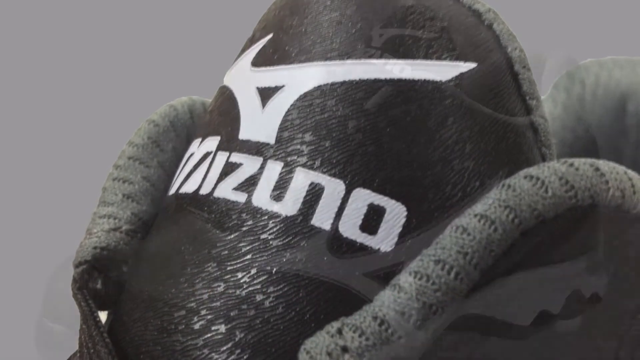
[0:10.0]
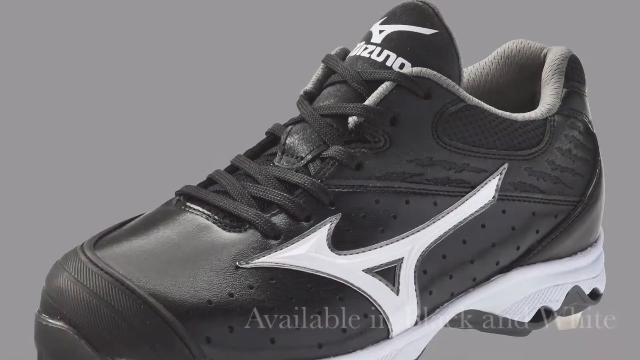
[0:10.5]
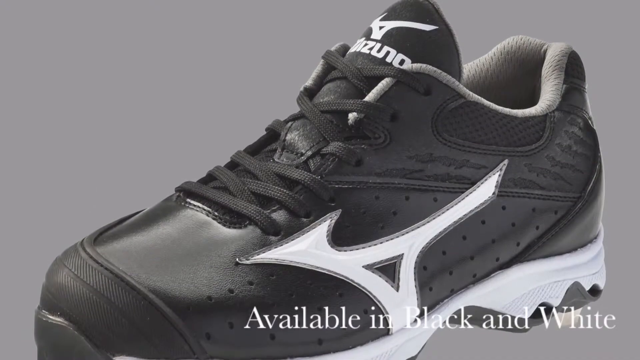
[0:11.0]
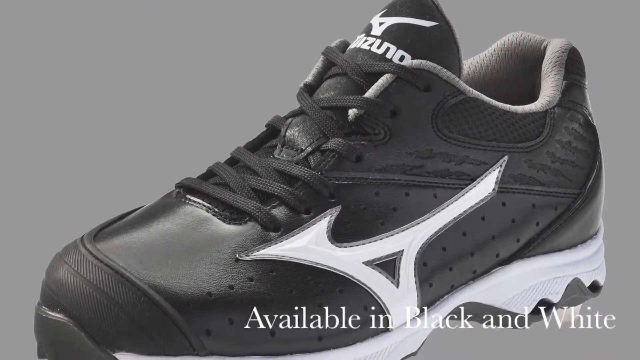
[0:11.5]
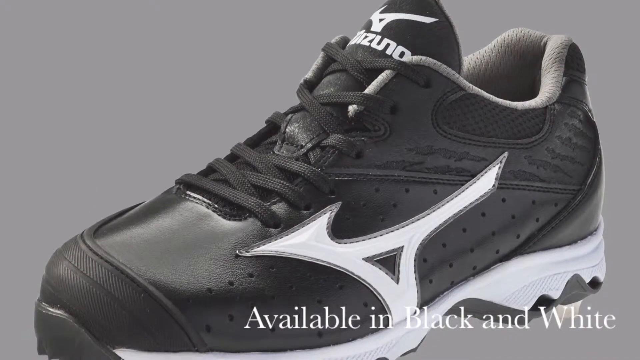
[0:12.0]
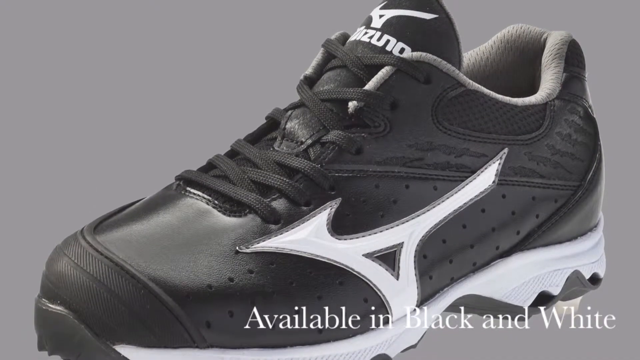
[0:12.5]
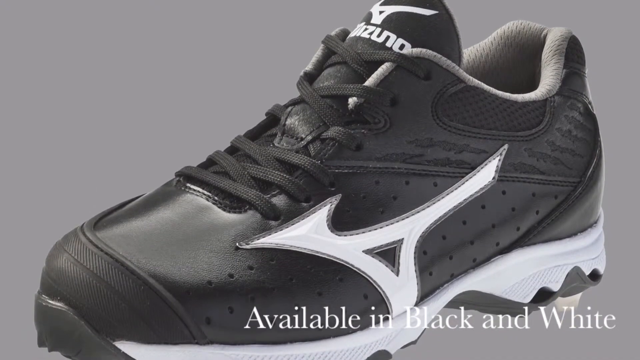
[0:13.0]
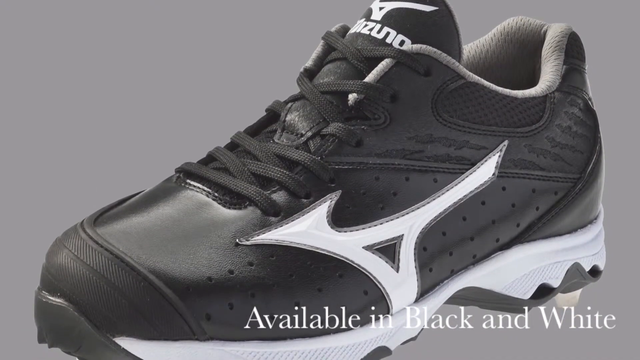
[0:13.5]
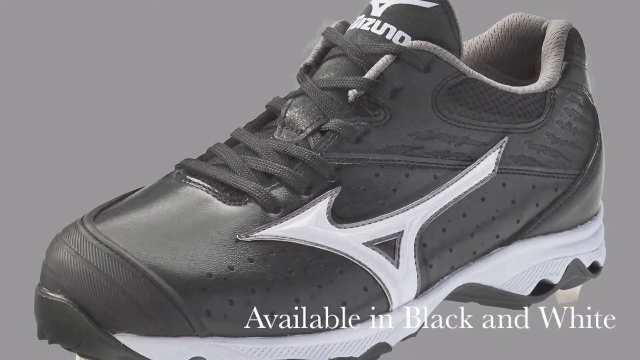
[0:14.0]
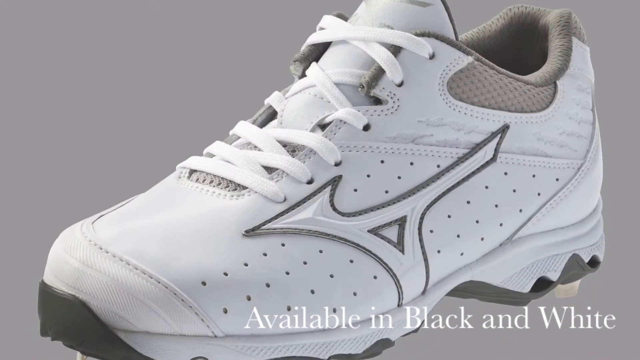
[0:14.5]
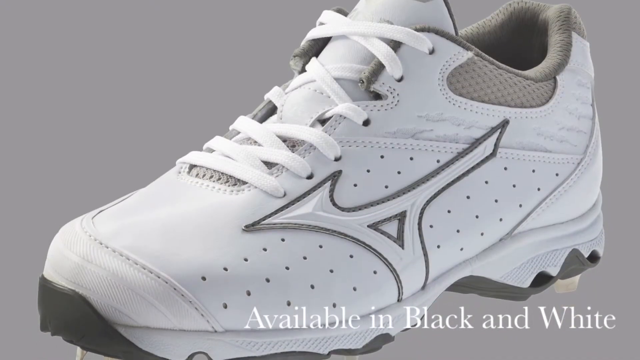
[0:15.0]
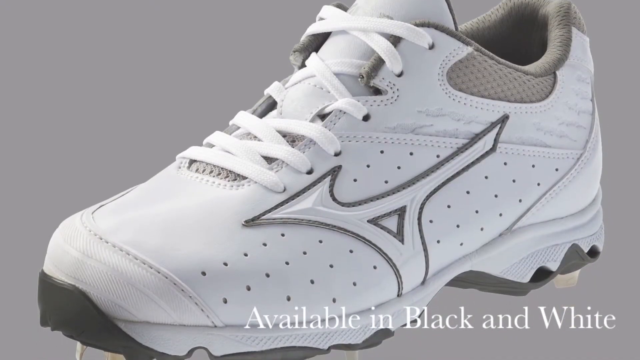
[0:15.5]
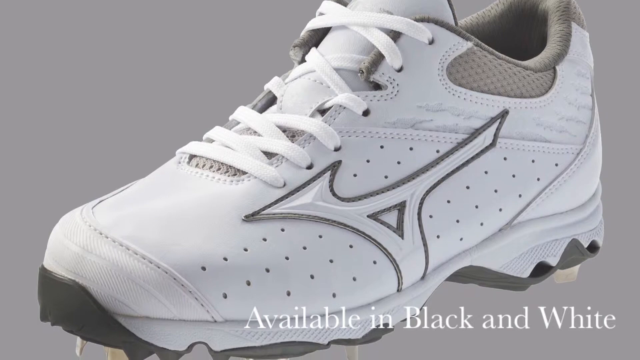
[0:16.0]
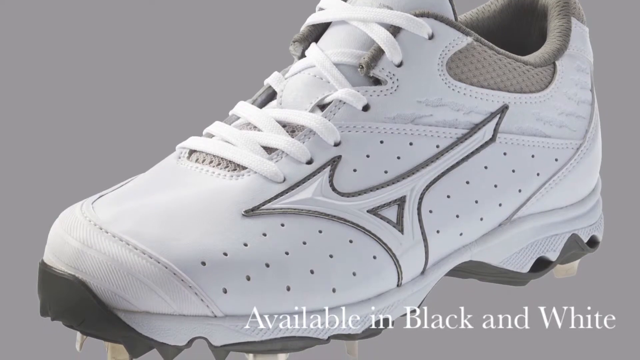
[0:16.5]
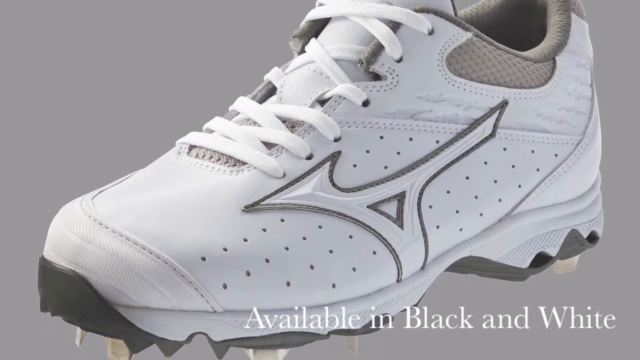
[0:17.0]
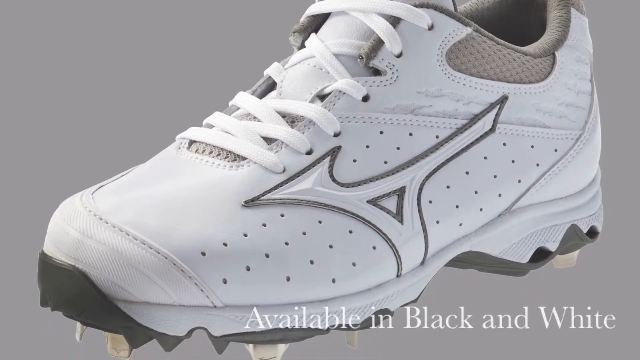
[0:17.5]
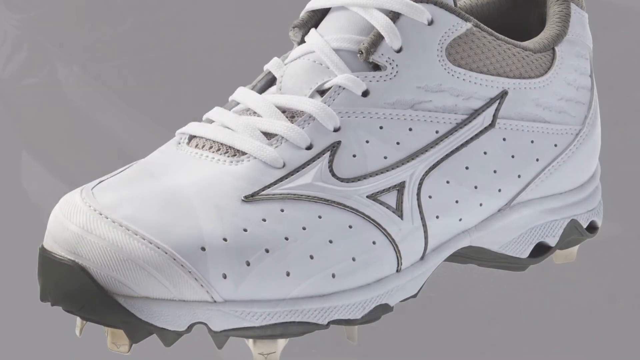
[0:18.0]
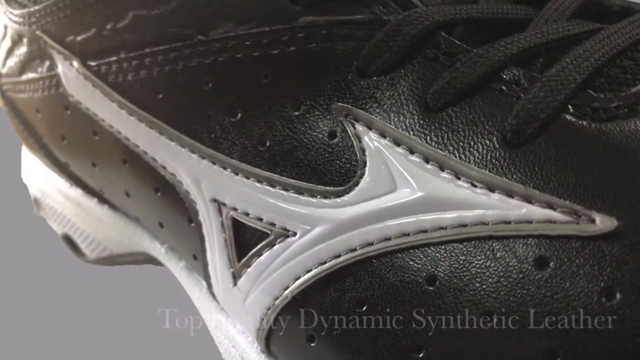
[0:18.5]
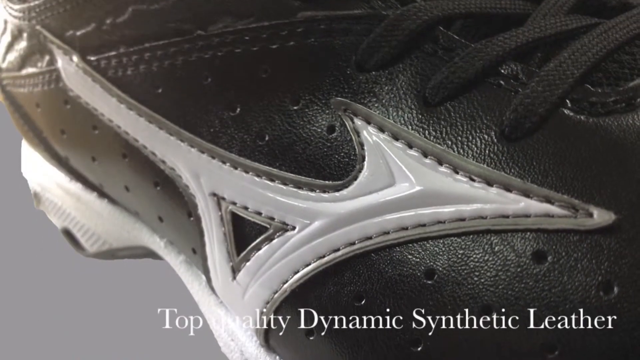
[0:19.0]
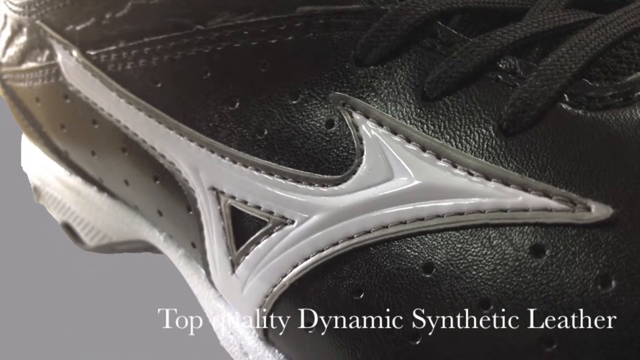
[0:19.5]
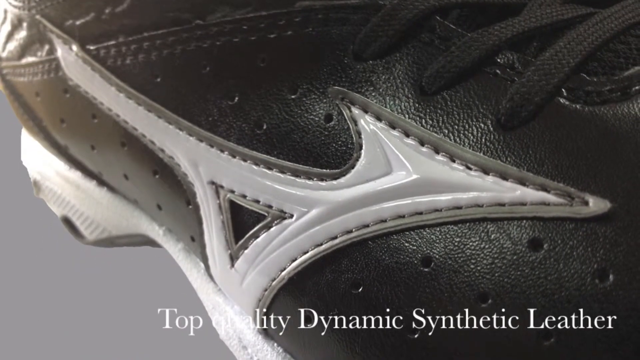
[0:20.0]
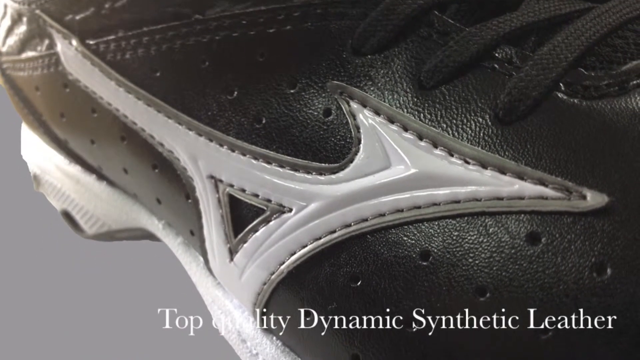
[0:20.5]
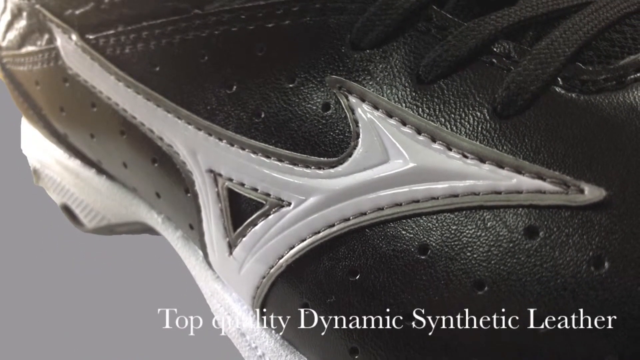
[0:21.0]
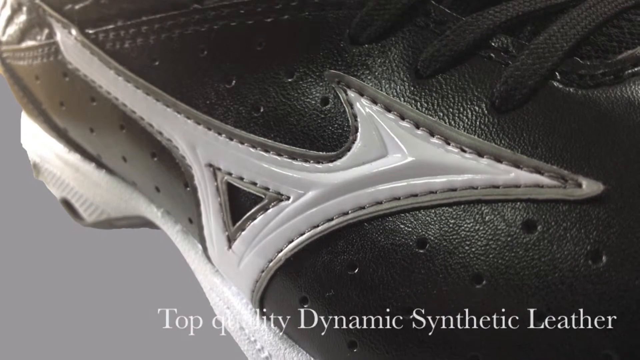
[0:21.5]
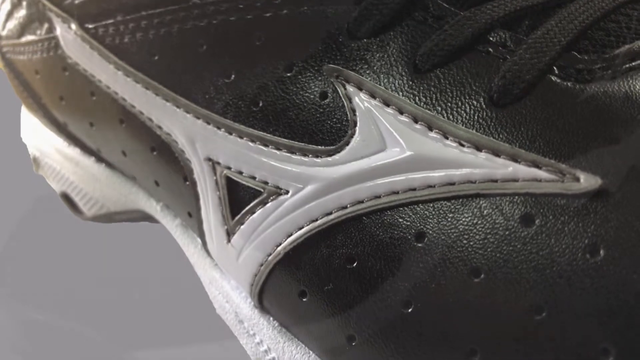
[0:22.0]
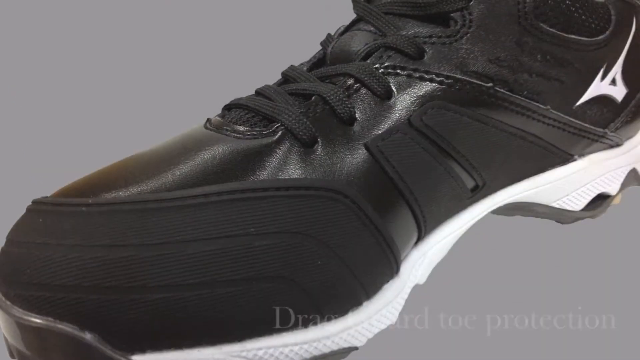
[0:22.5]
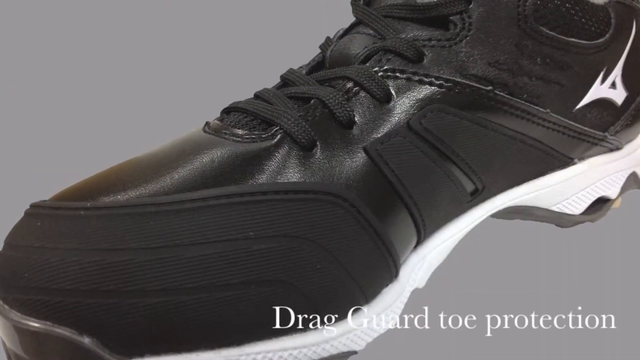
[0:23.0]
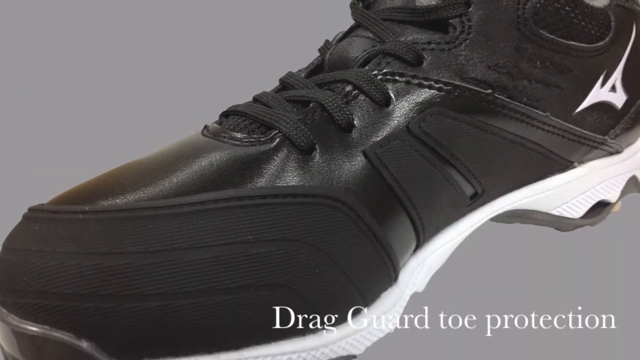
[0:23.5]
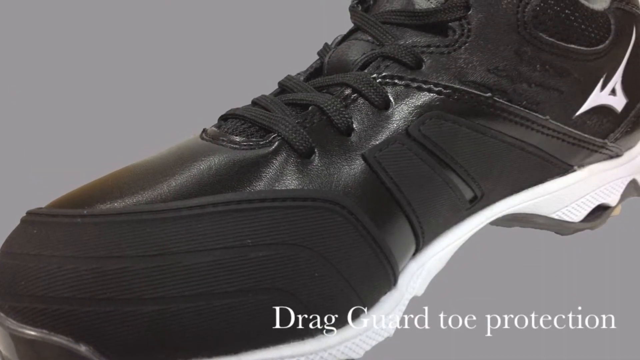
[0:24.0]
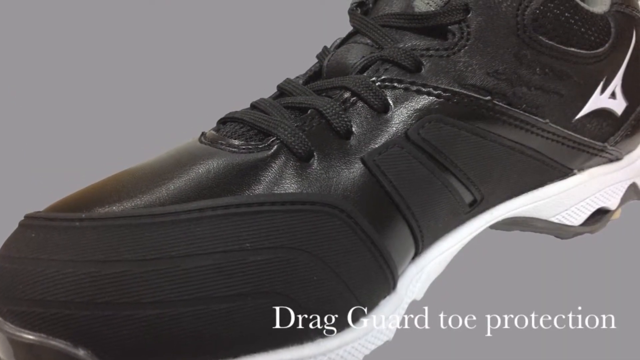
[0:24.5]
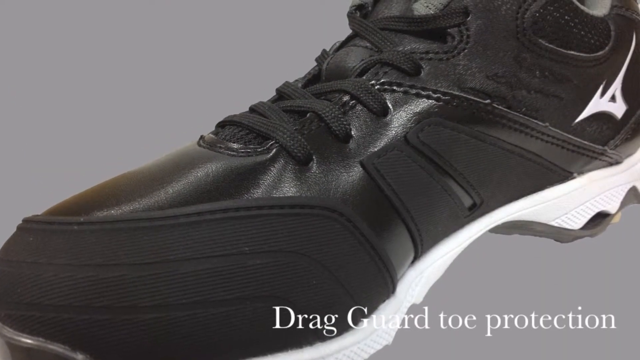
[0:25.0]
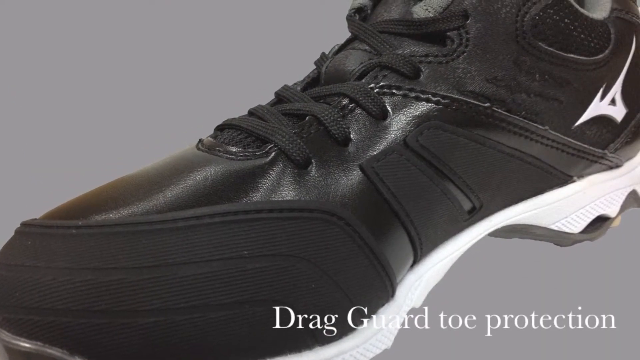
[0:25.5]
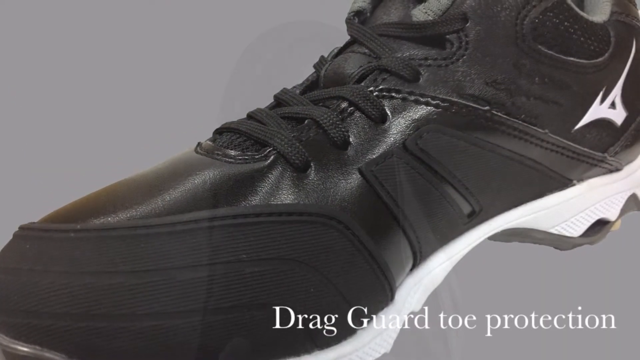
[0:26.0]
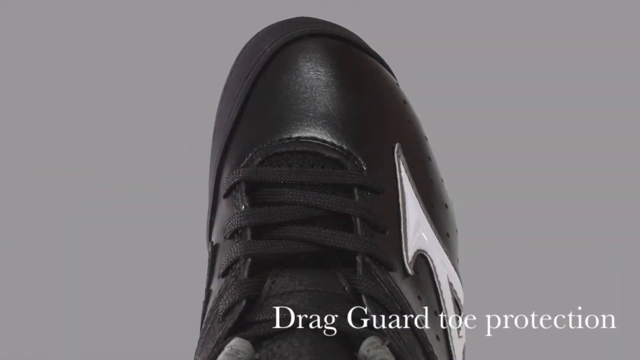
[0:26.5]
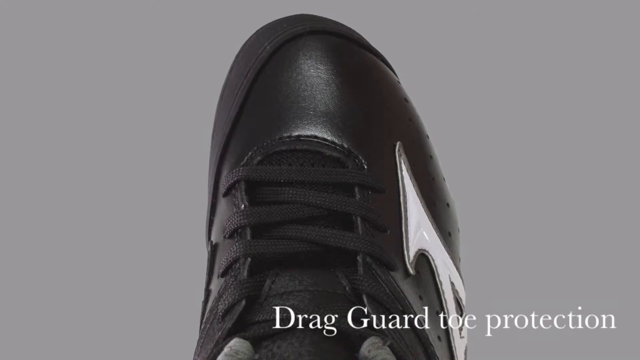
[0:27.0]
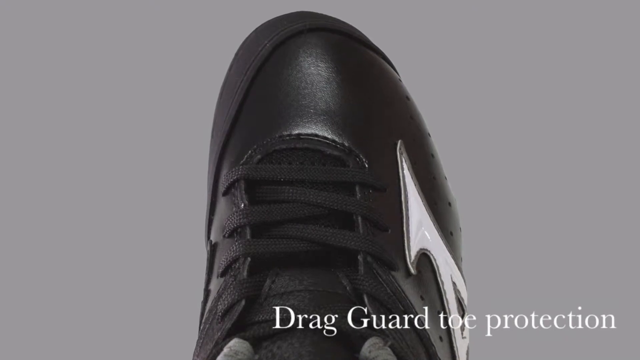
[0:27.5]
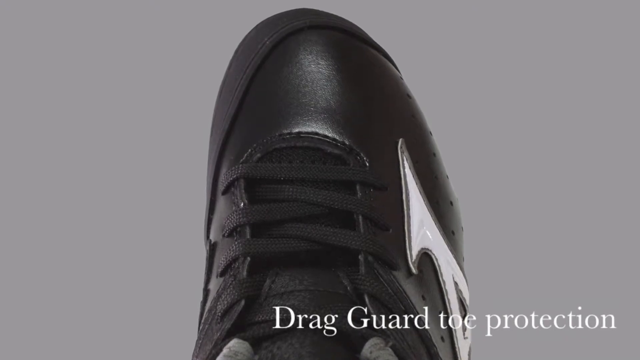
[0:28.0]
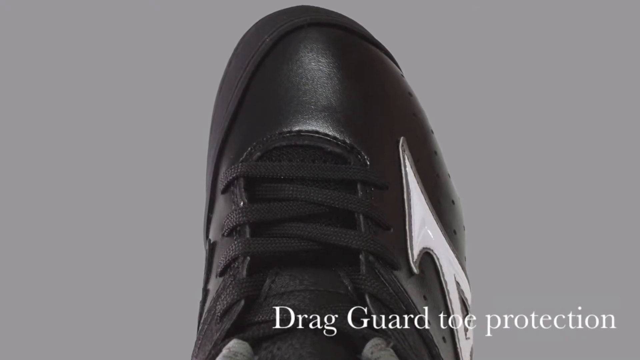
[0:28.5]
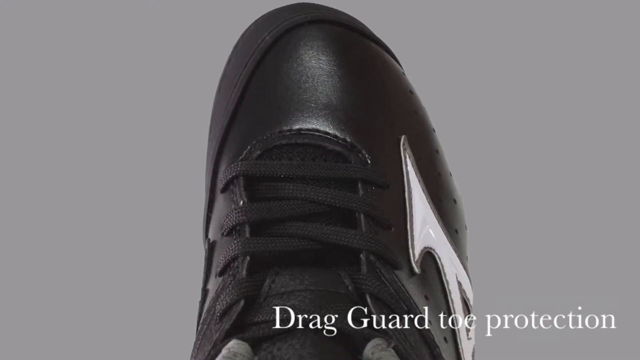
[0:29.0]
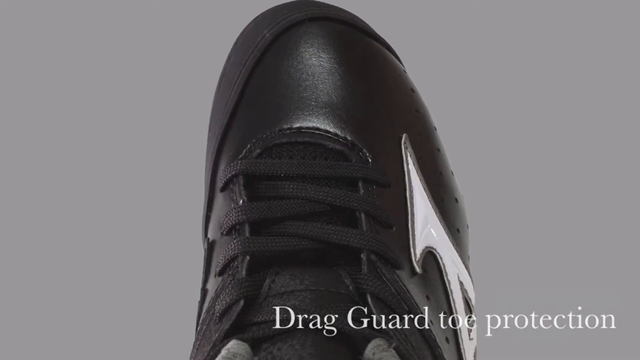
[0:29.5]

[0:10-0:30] More information about the Mizuno 9-spike cleats appears. Pictures come on screen showing the cleats in black and in white. The text says the cleat has a rubber toe guard and is made of "top quality dynamic synthetic leather" that is very breathable. It also says it has "drag guard toe protection".